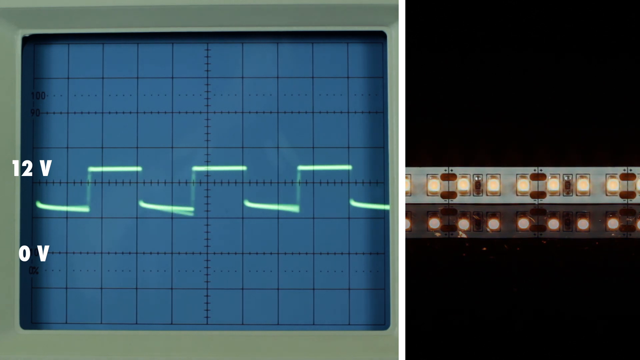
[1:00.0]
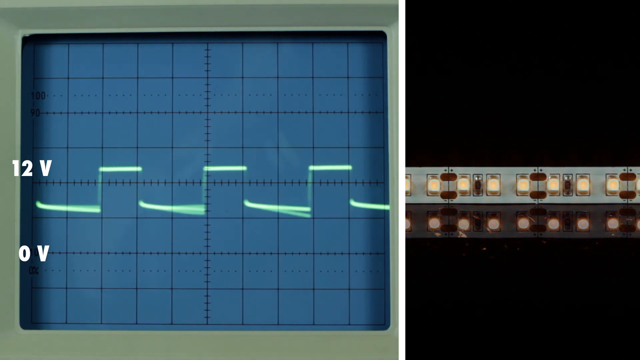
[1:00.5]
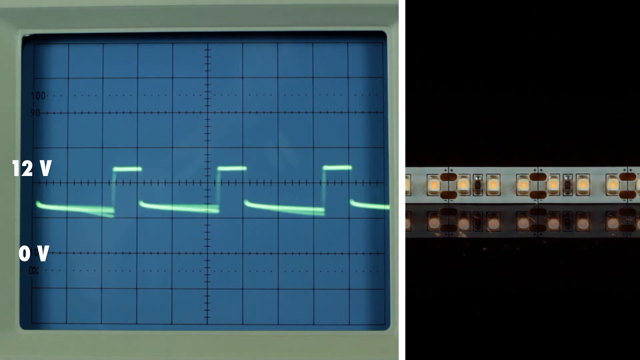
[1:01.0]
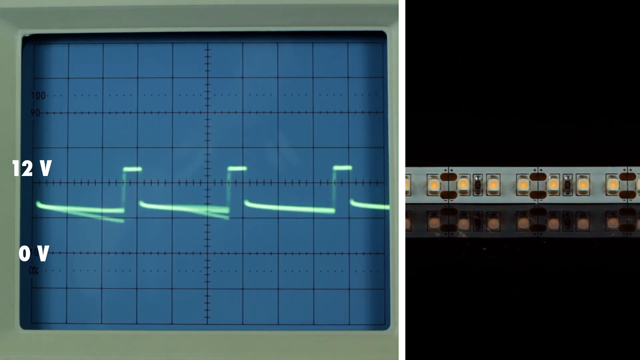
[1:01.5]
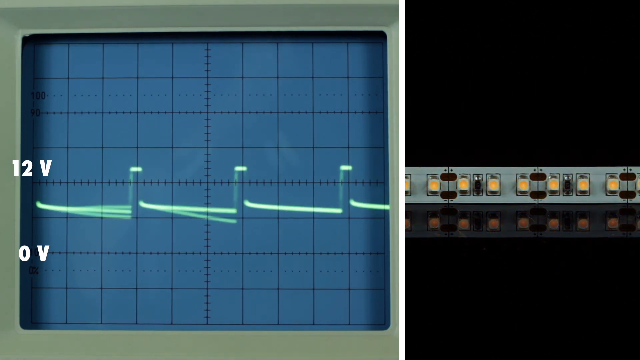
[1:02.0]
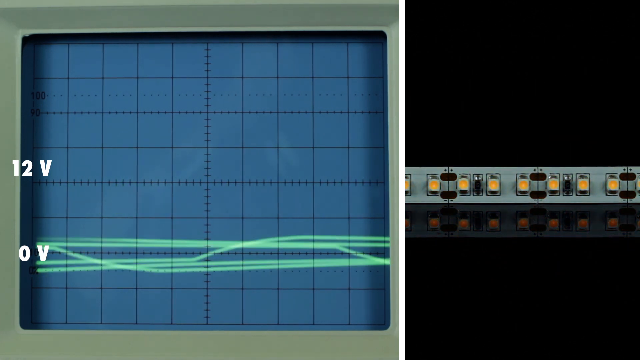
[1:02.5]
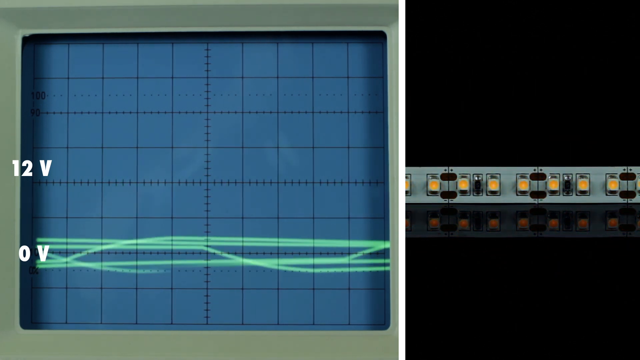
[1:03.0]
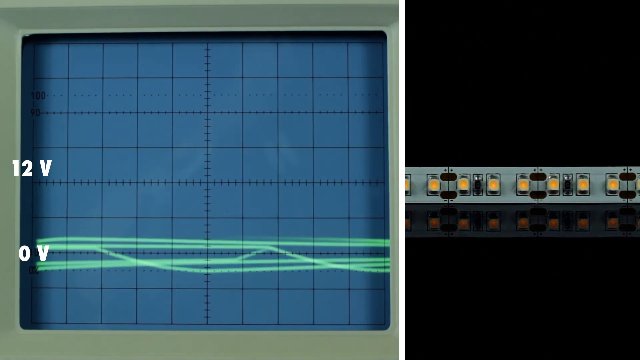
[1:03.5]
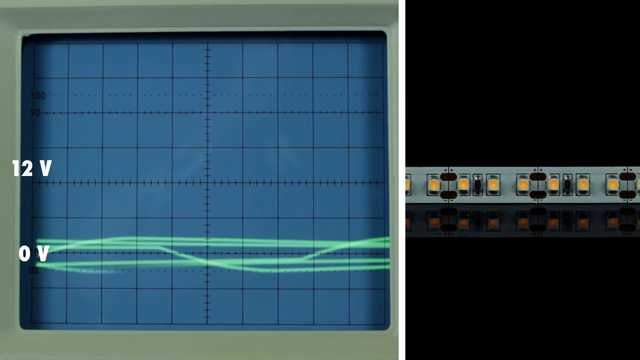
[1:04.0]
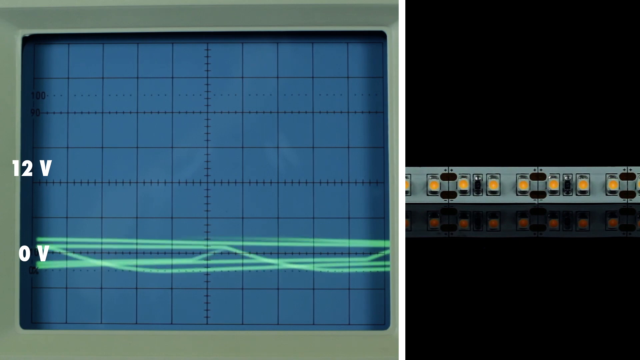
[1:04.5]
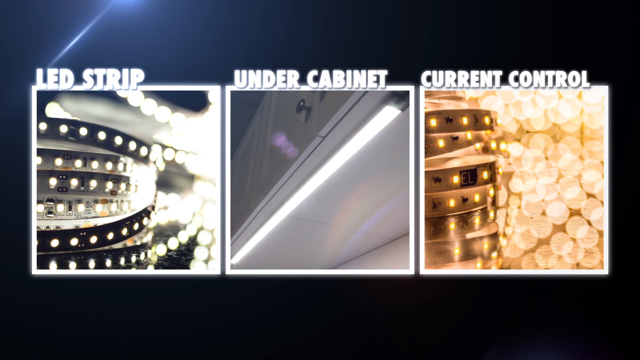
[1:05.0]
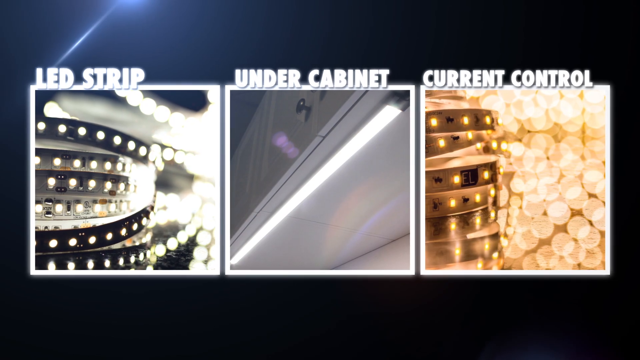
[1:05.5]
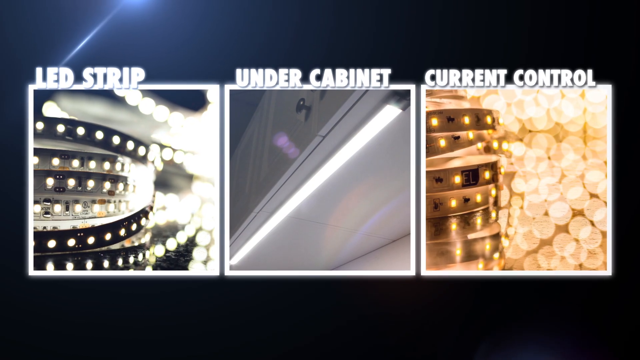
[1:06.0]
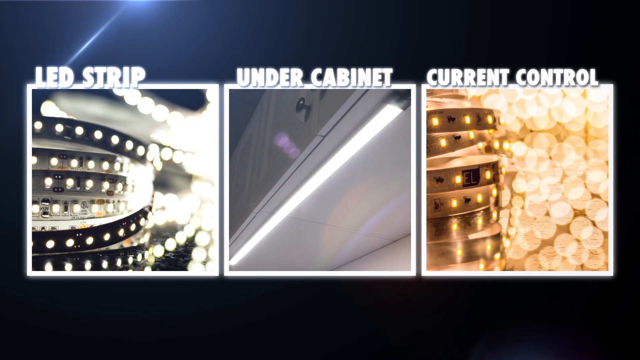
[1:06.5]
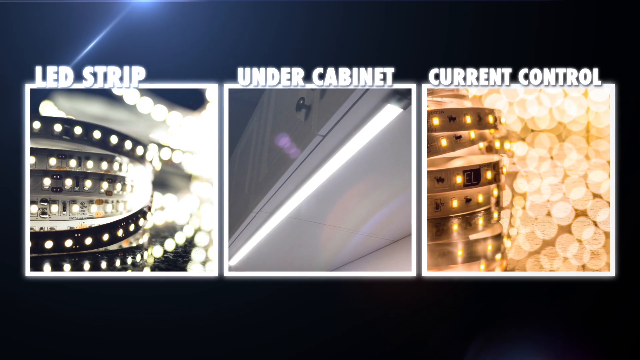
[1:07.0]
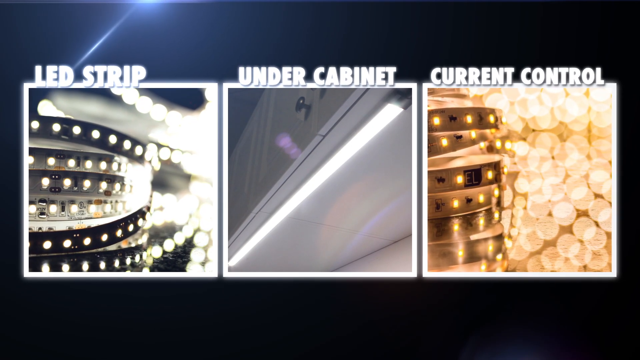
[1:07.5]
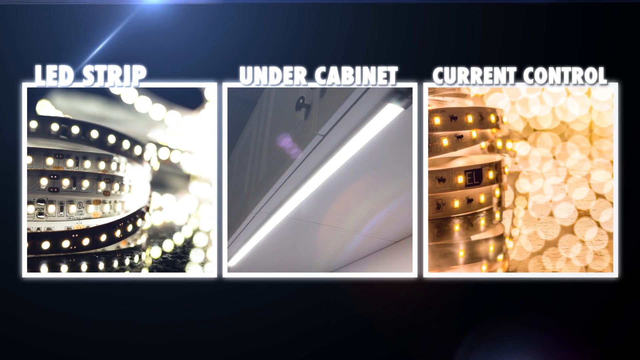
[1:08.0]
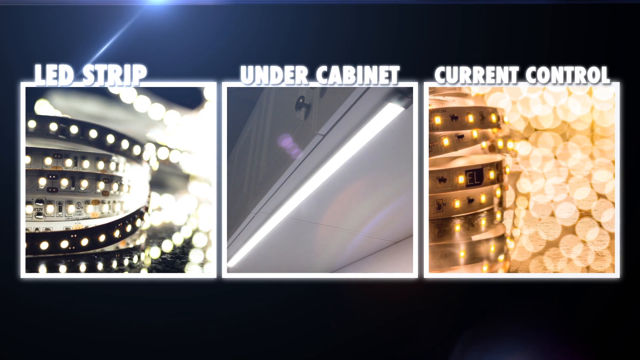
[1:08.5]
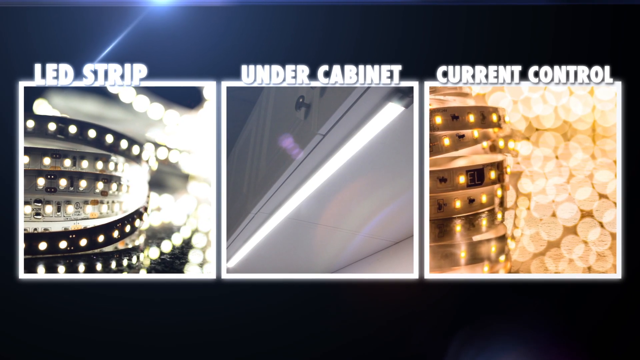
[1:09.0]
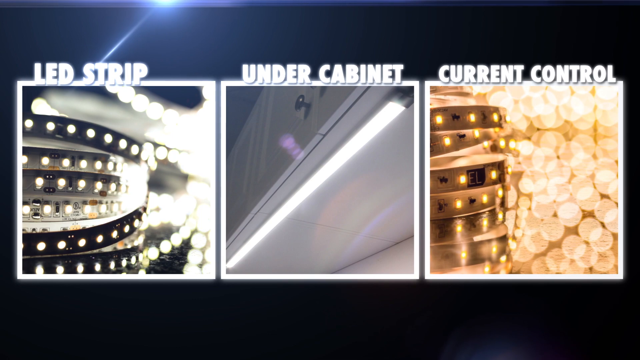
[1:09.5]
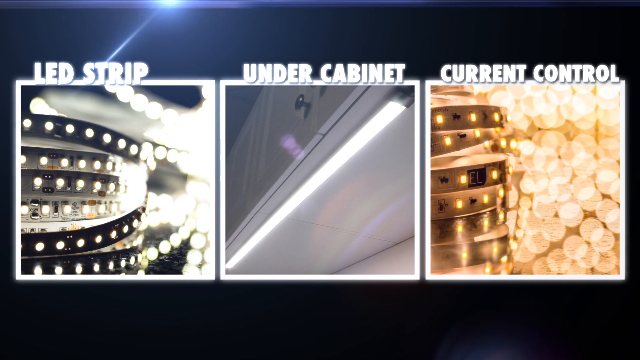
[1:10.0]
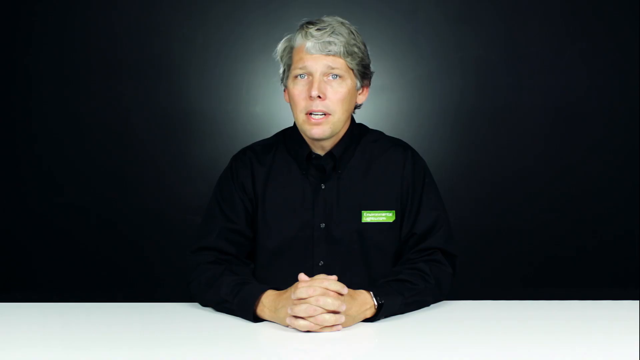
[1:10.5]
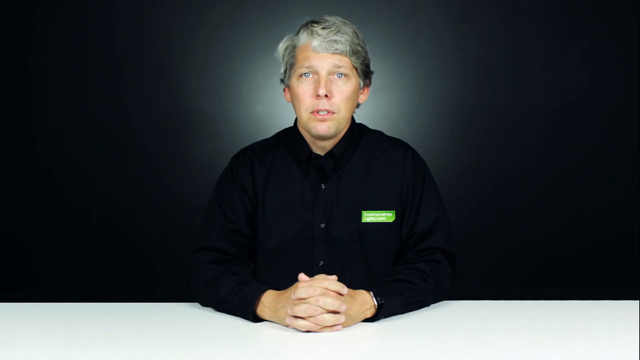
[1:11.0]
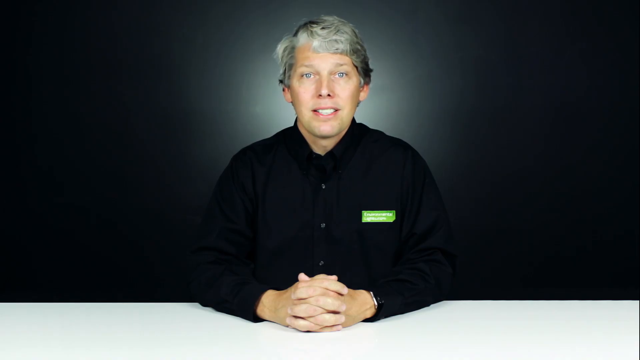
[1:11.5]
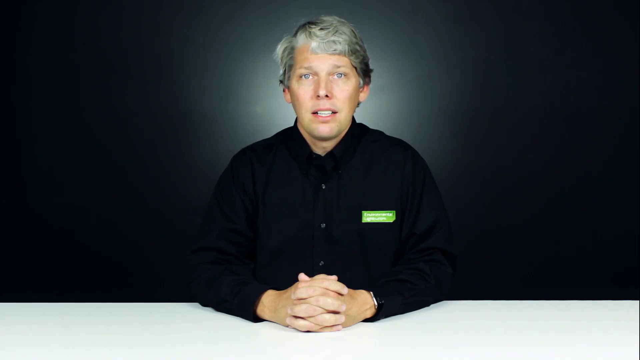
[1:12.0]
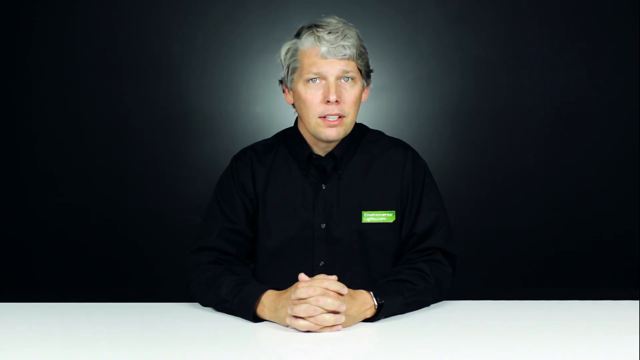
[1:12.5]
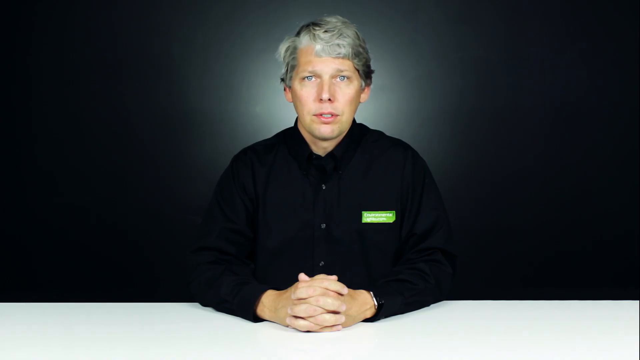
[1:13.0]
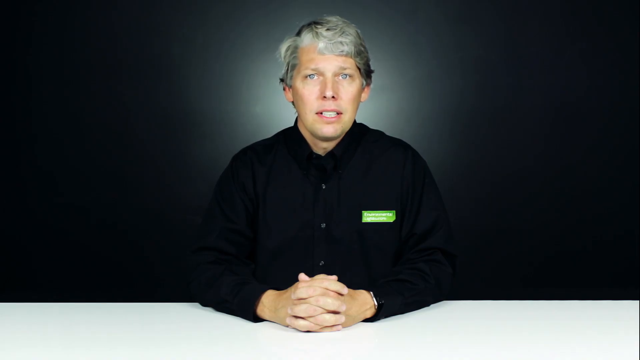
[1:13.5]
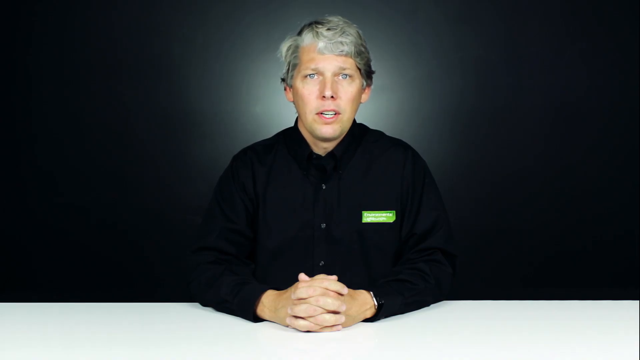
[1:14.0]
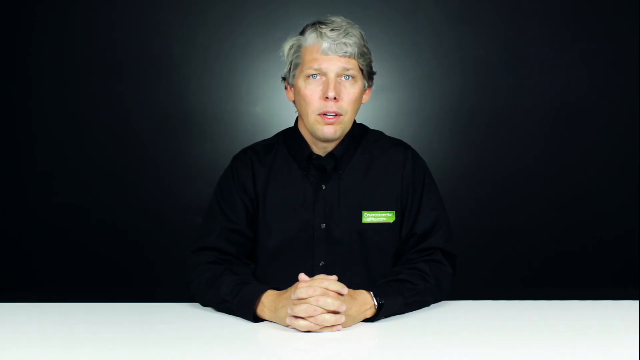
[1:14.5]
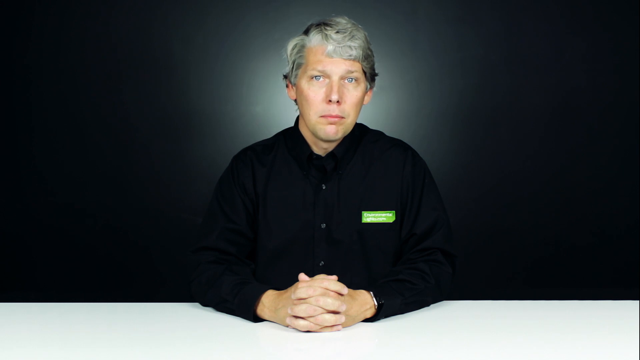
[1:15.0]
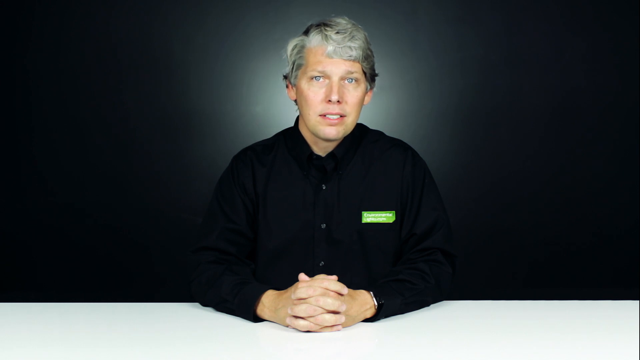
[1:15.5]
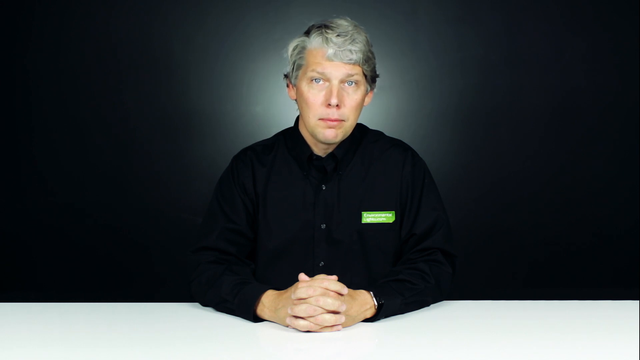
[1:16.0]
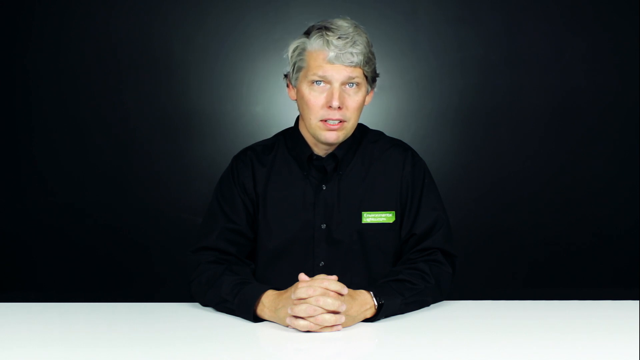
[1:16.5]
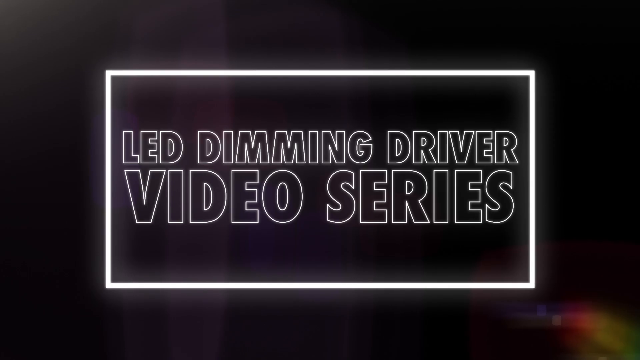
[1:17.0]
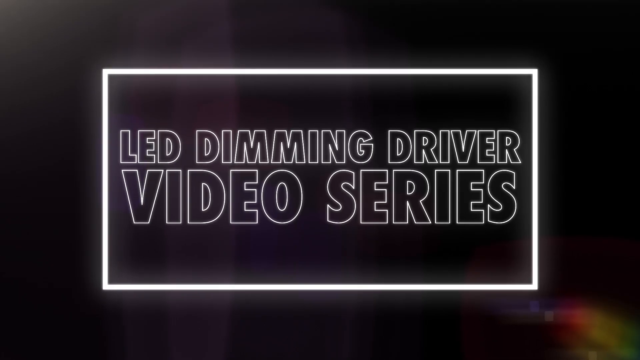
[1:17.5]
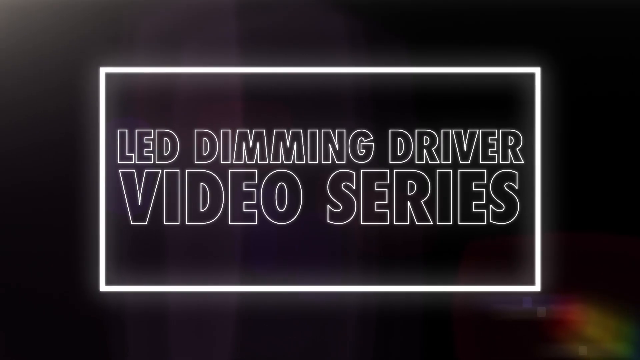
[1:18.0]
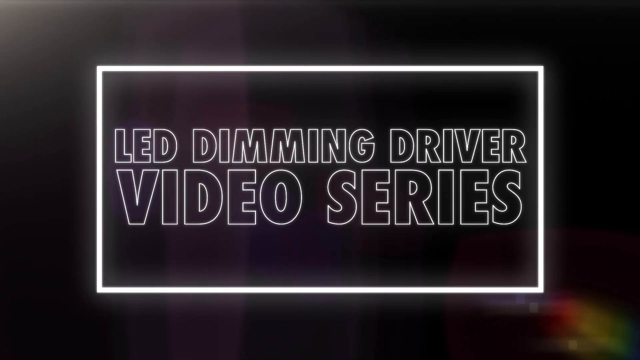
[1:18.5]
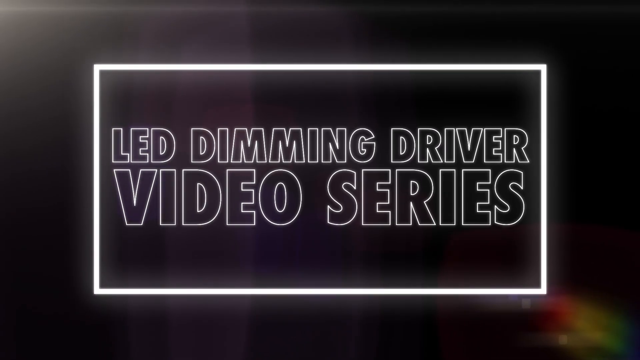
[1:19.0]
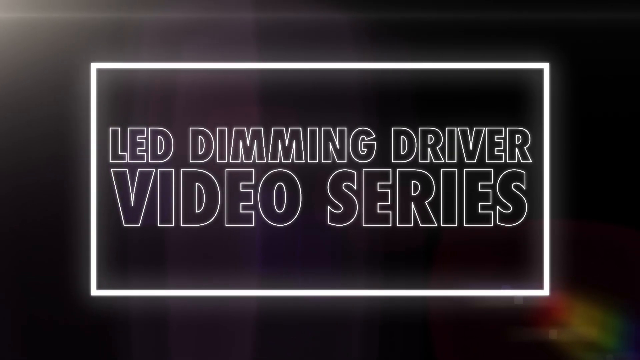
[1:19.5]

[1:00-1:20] A light is visible, along with the pathway of the electrical part. The values 12 volt, then zero volt, are shown.